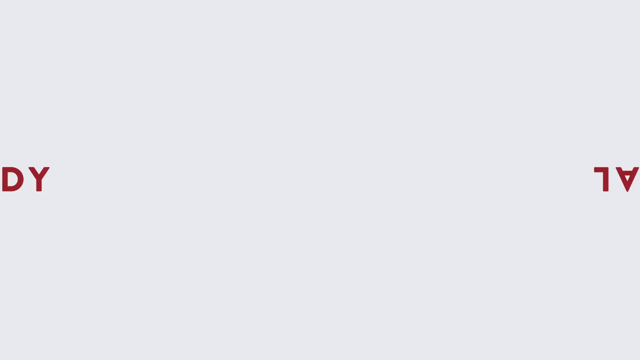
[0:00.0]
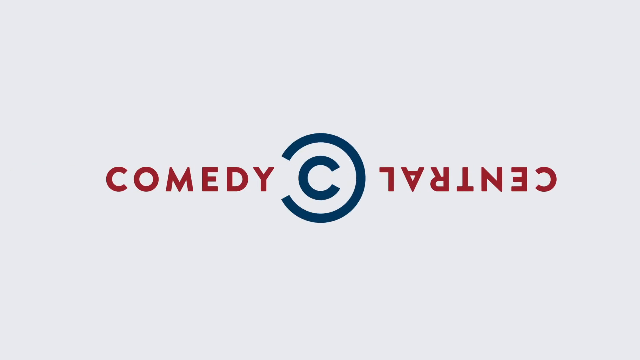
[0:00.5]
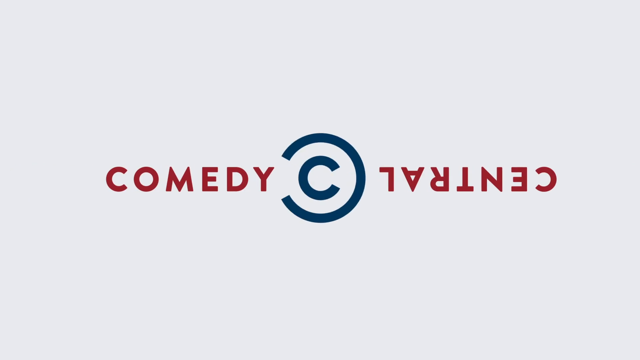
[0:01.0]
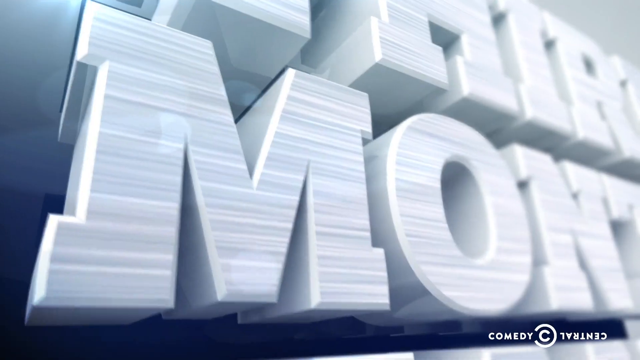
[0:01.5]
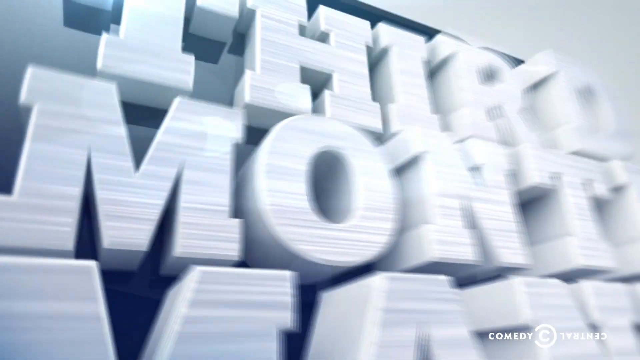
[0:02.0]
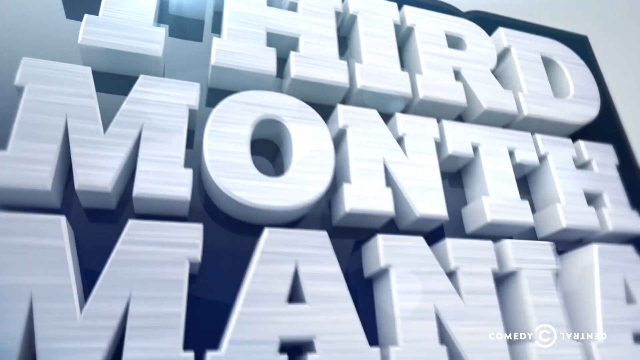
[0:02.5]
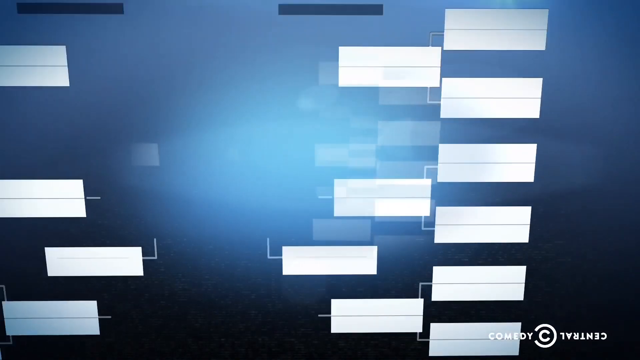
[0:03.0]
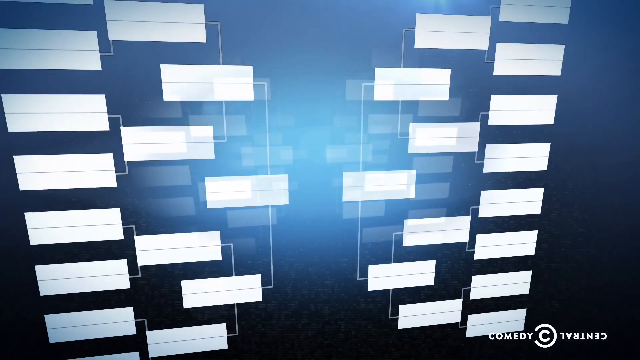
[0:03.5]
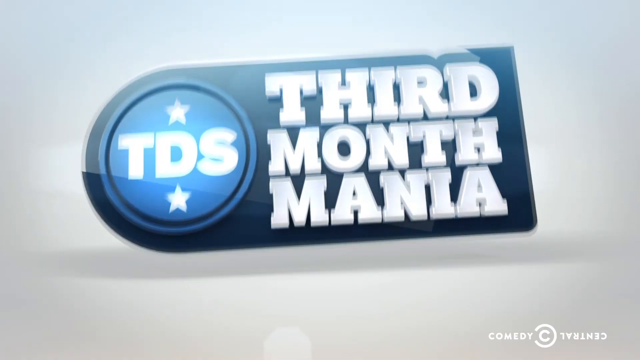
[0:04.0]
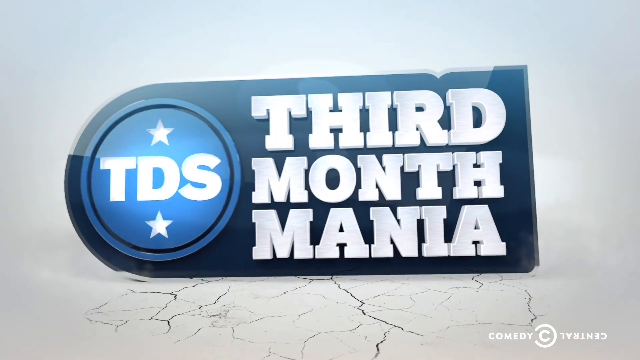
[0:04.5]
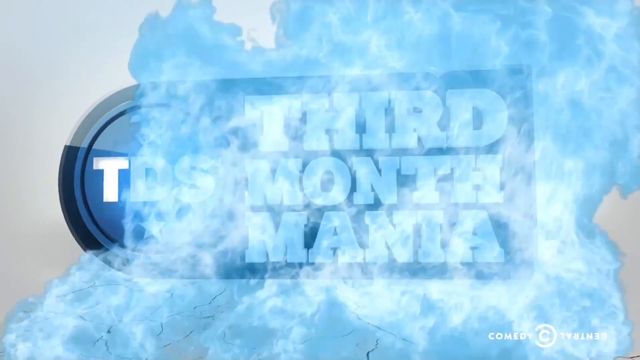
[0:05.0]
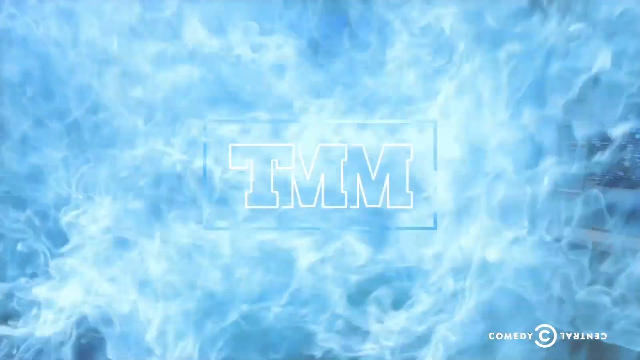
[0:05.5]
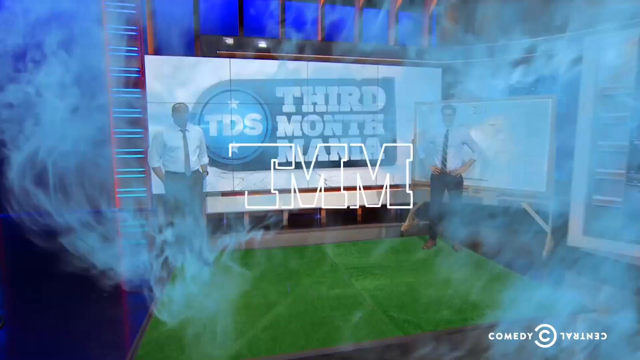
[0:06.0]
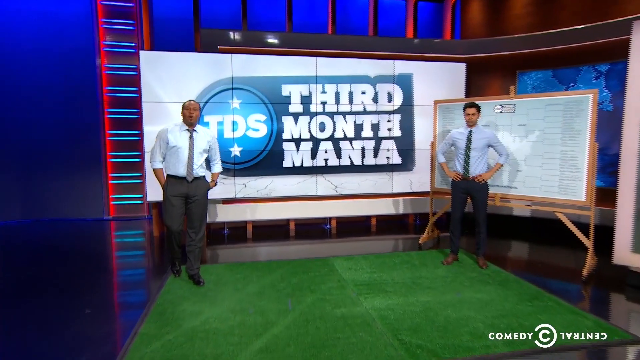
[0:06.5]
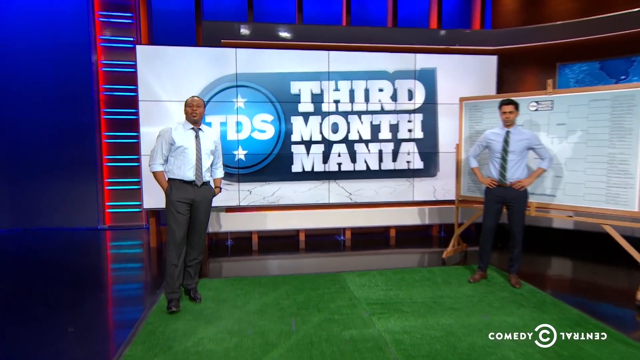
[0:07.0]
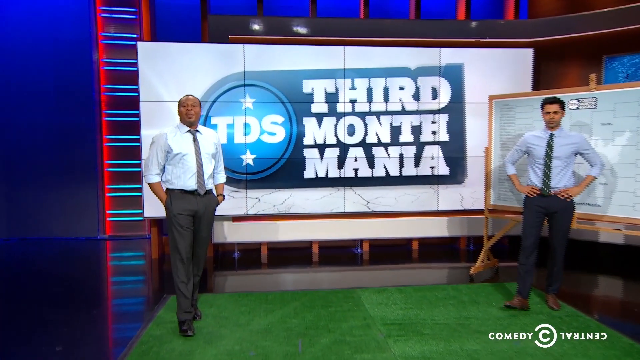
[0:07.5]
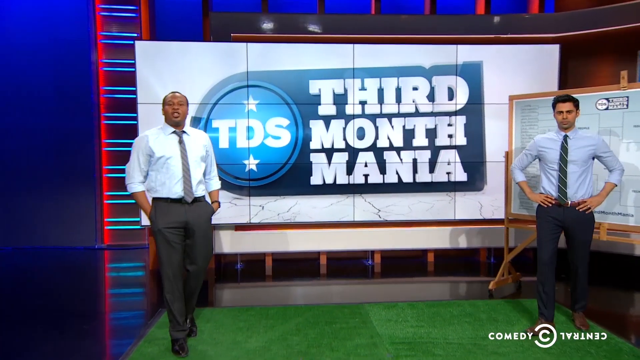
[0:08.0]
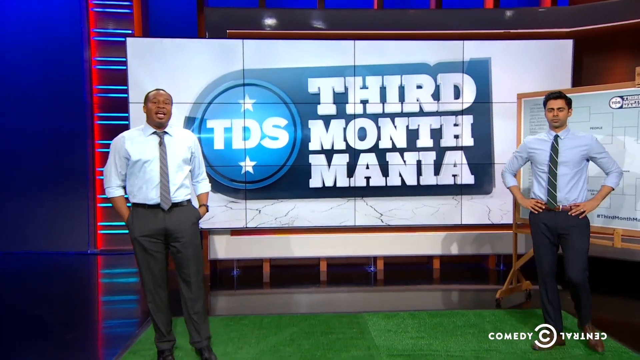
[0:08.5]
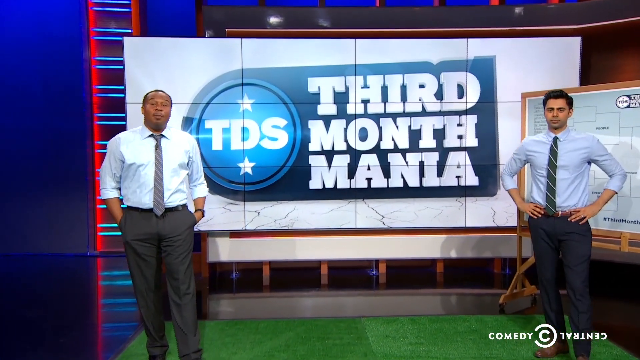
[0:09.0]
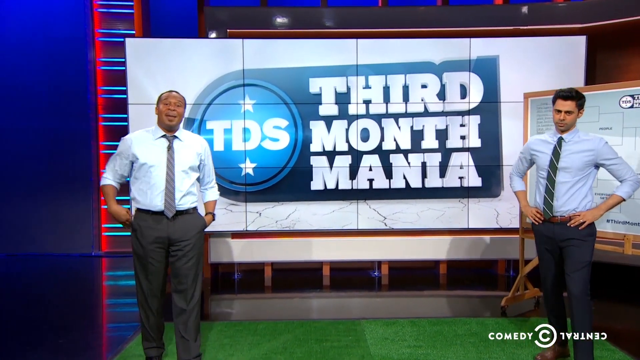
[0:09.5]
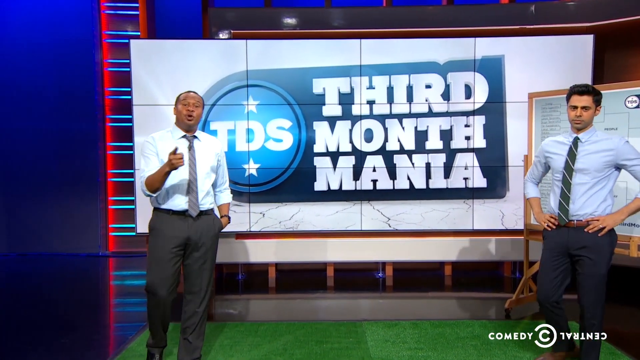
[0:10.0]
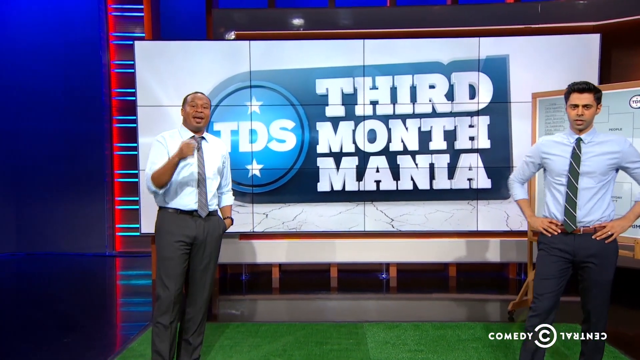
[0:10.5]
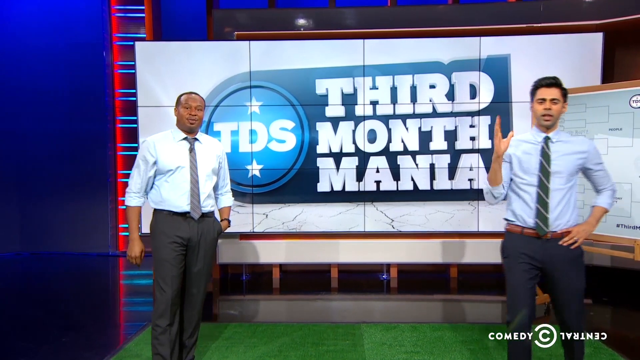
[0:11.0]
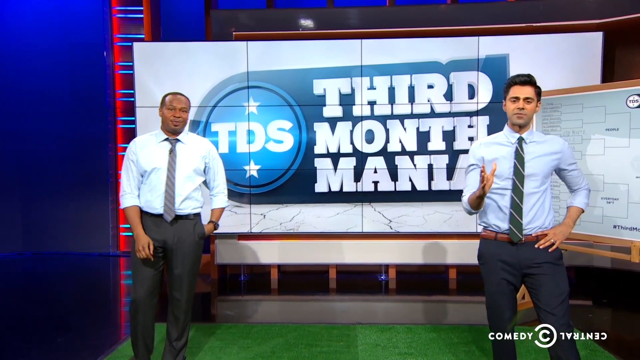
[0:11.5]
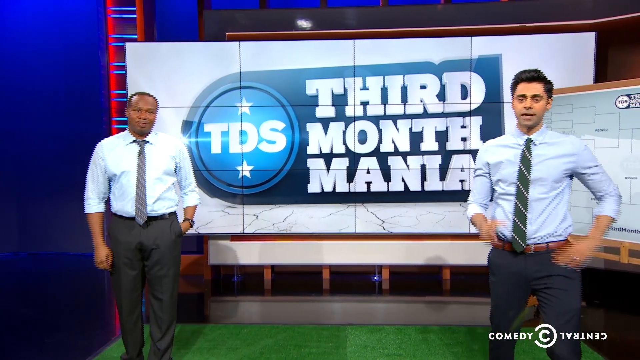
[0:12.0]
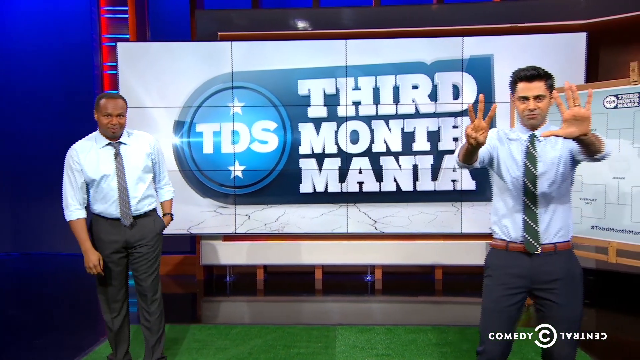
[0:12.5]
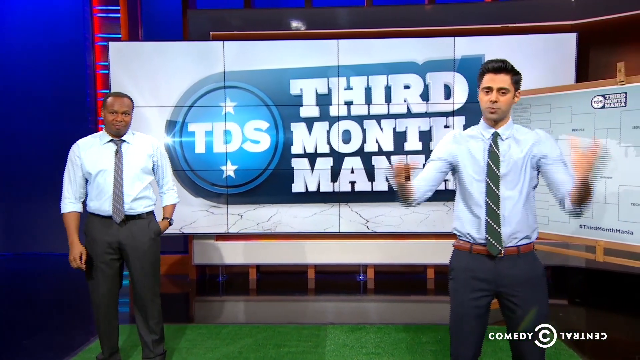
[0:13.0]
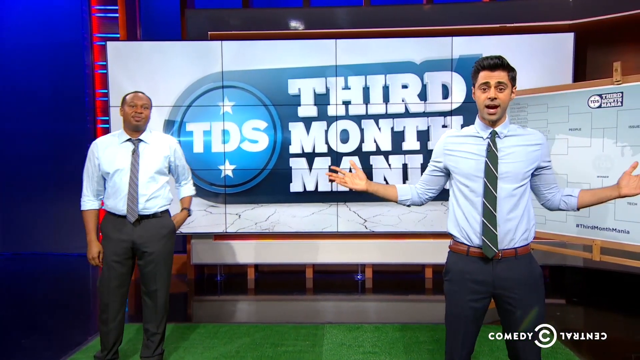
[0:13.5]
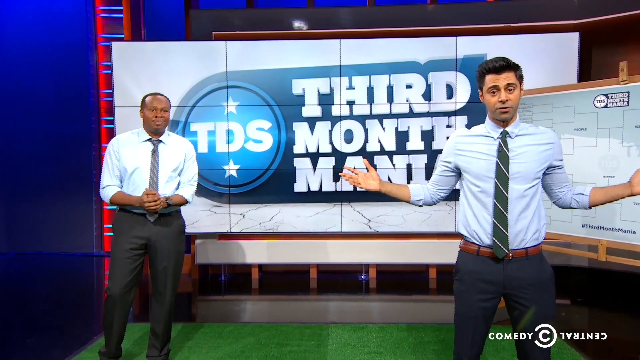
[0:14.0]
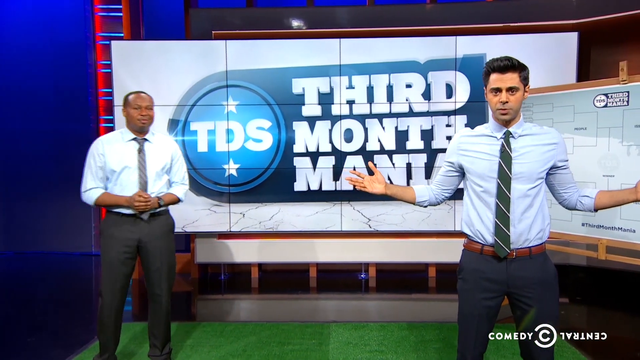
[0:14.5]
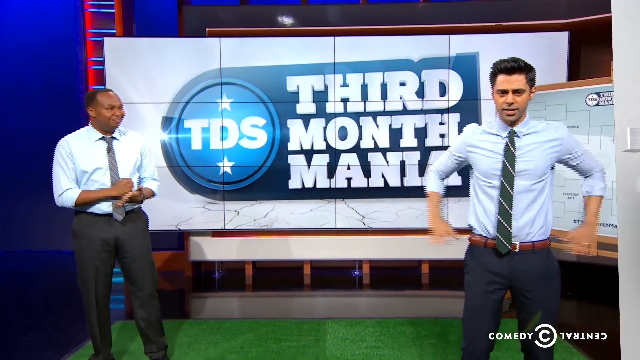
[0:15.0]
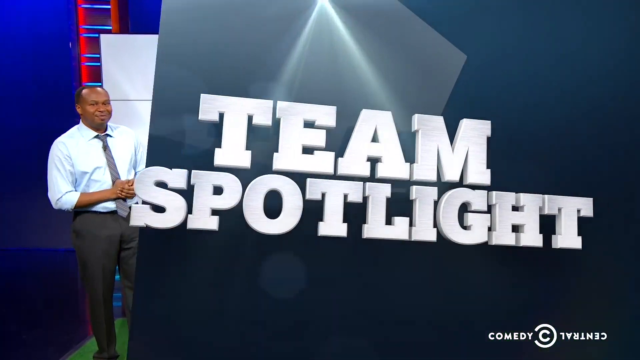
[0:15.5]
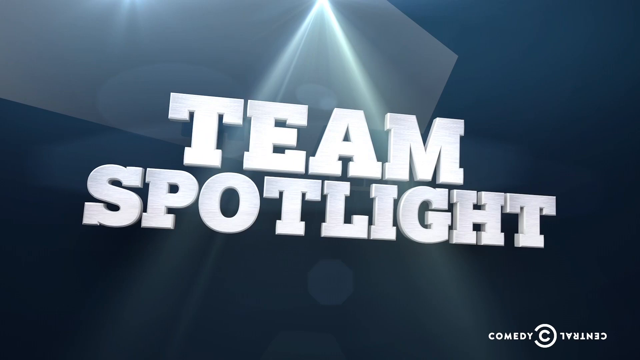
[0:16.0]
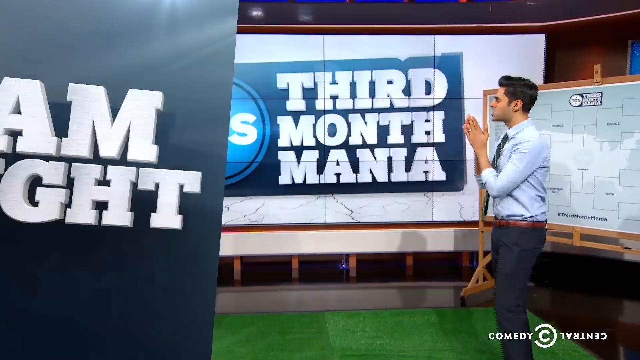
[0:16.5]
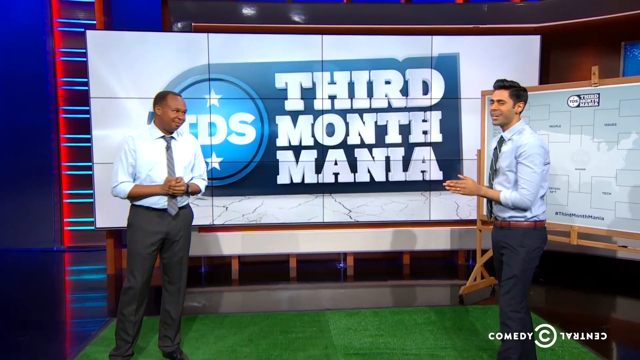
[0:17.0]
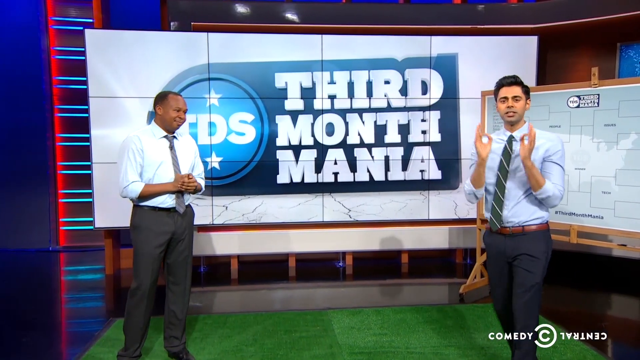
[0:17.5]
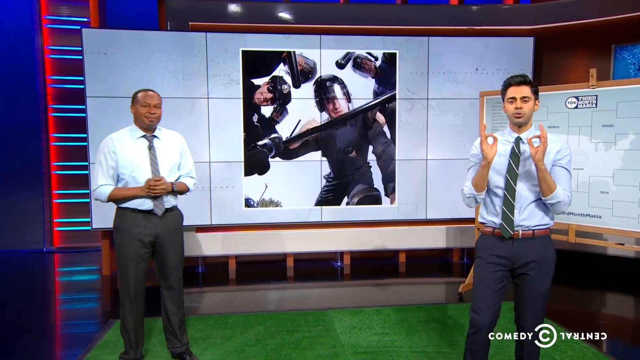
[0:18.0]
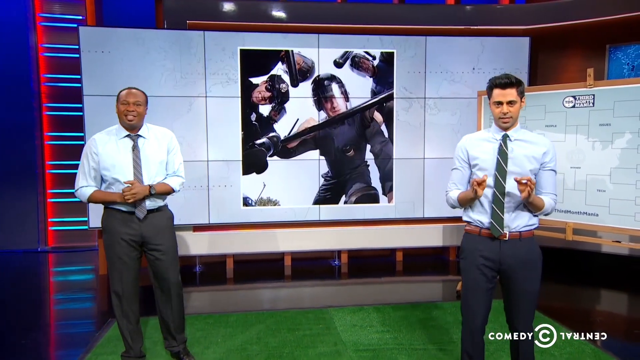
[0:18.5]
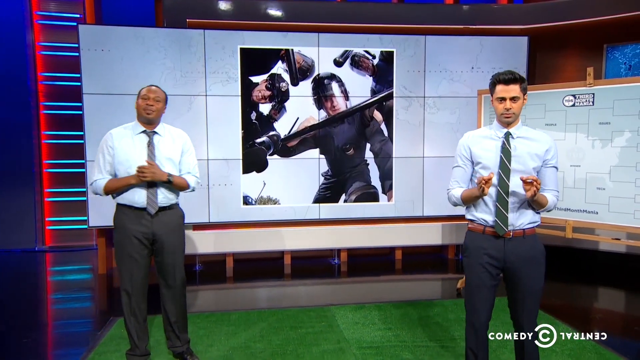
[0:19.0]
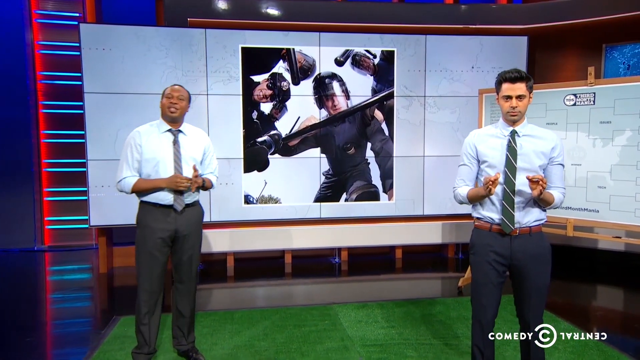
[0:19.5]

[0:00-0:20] The video opens on the name Comedy Central, with a C in the center and a larger backwards C in blue. It then changes to a logo that says "third month mania", with a fast-moving graphic; the logo has white text on a blue background. Next, two men appear in suits and dress pants with ties. One has a white shirt and gray pants, and the other has what looks like a navy tie and darker pants. Behind him is a wooden board along with what looks like green artificial turf, and the screen shows a logo that says "TDS". Both men speak and point toward the screen, holding their hands out, and the screen says "team spotlight". They point some more, and the board behind them changes to show a group of four police officers in uniform looking down at something. One appears to be holding a large weapon in a stance that seems ready to act.